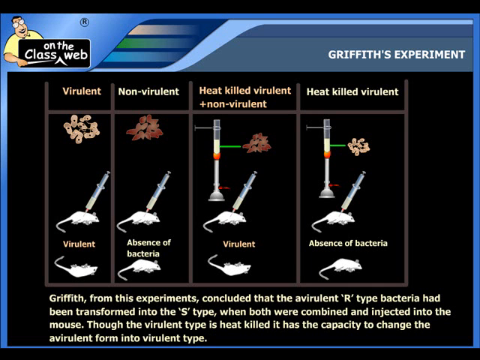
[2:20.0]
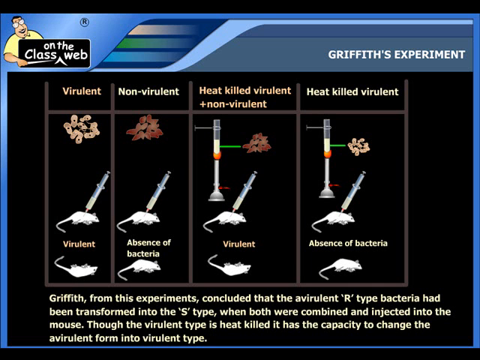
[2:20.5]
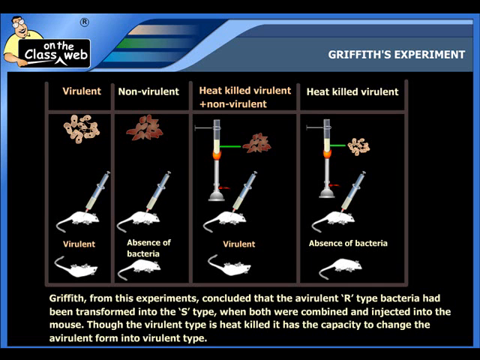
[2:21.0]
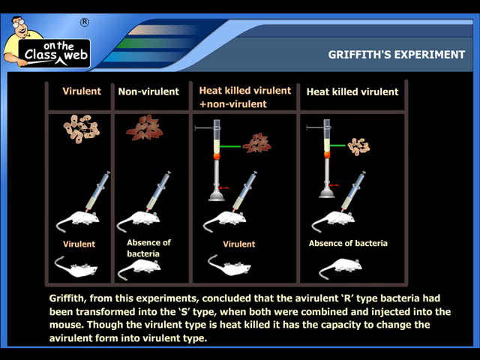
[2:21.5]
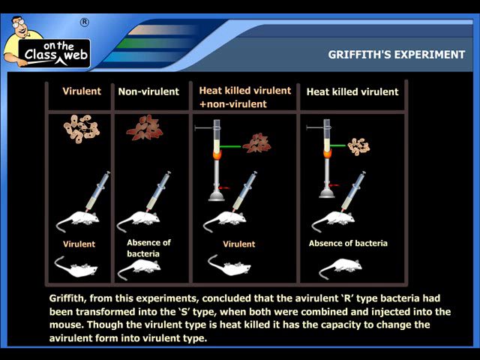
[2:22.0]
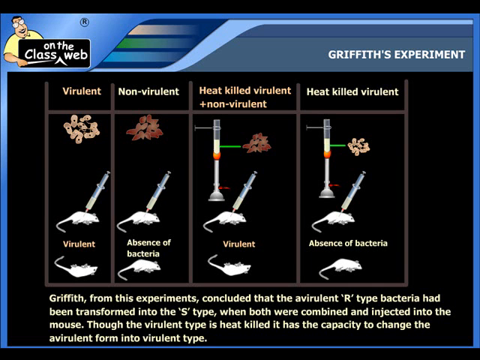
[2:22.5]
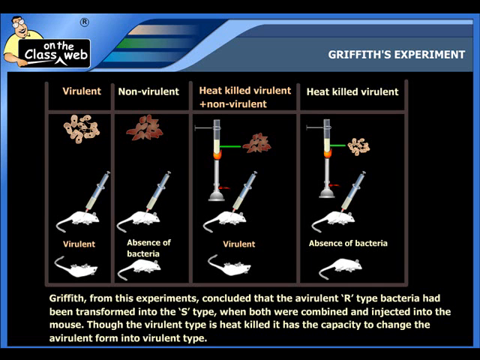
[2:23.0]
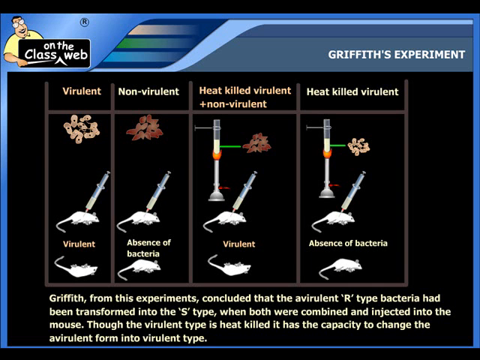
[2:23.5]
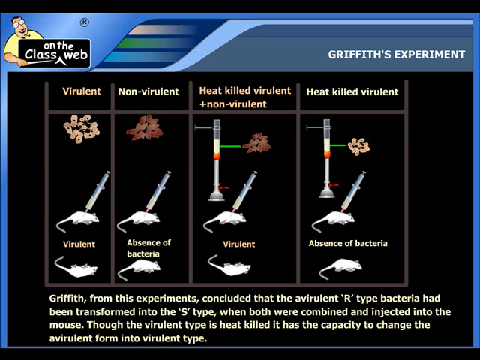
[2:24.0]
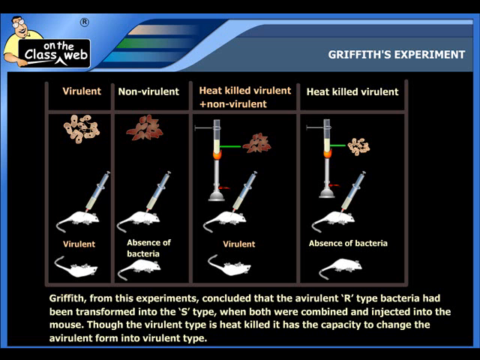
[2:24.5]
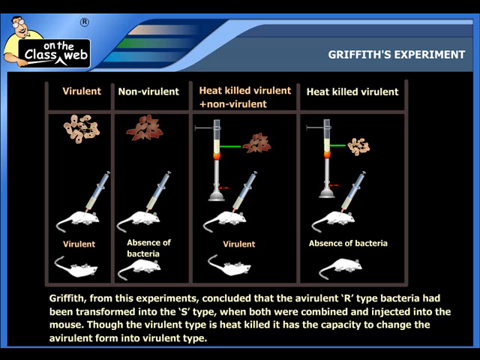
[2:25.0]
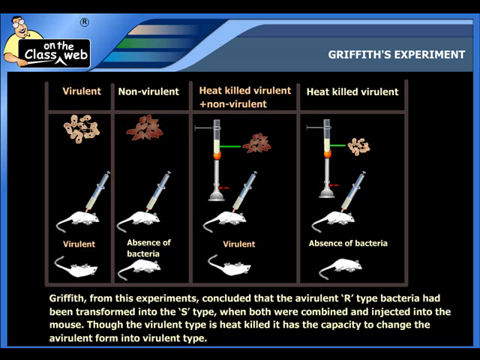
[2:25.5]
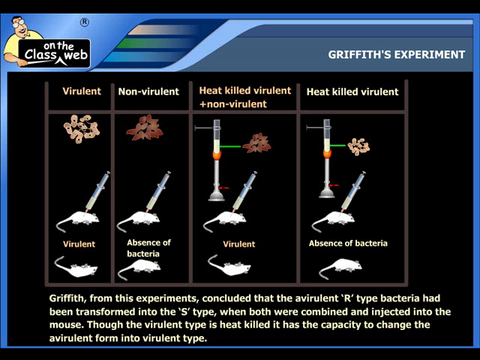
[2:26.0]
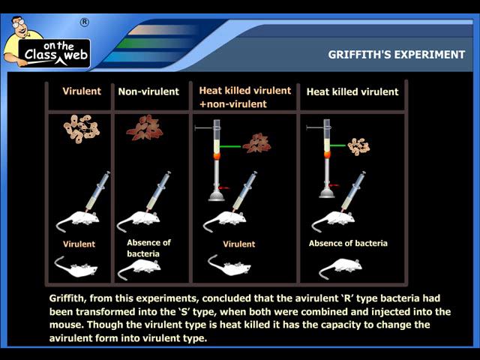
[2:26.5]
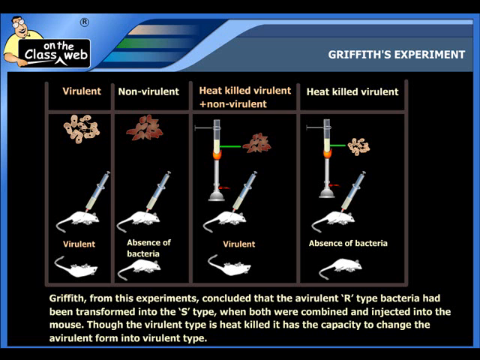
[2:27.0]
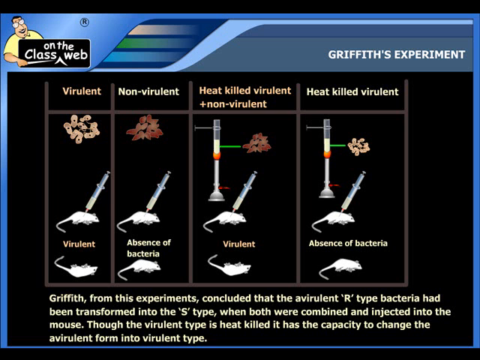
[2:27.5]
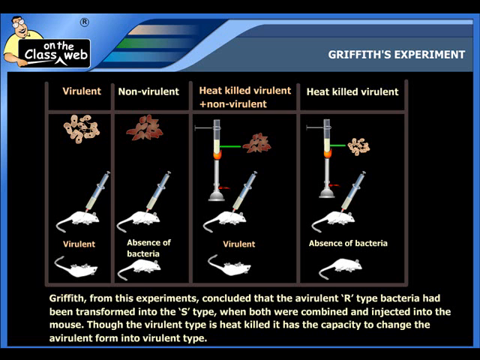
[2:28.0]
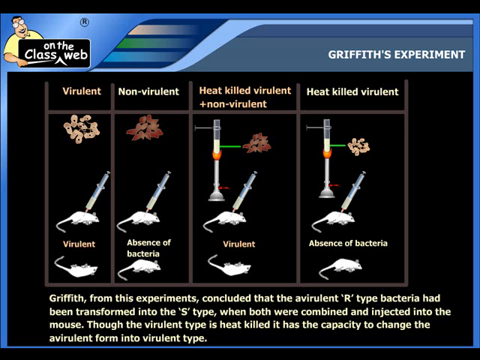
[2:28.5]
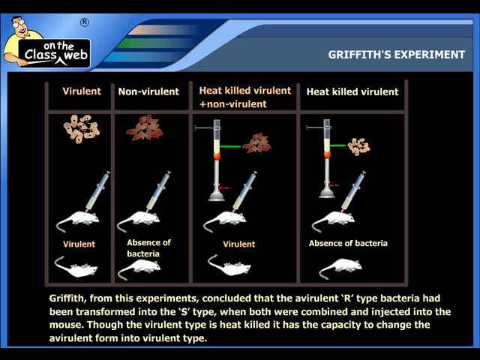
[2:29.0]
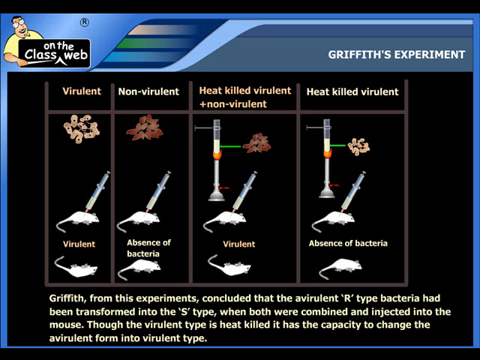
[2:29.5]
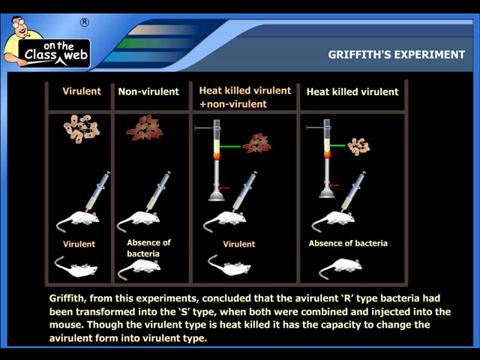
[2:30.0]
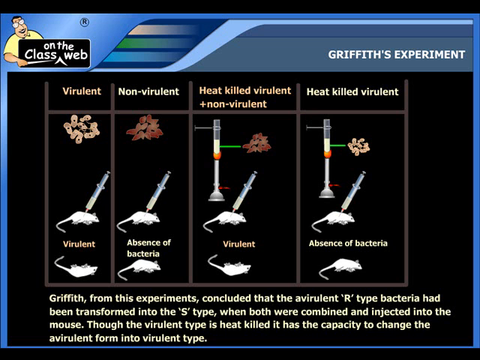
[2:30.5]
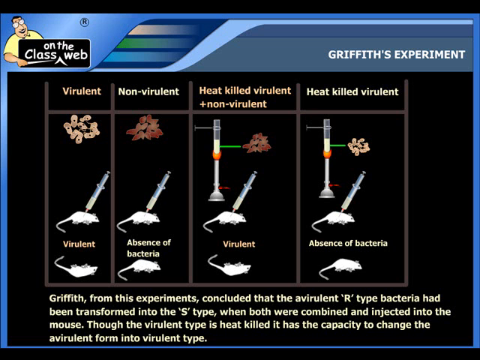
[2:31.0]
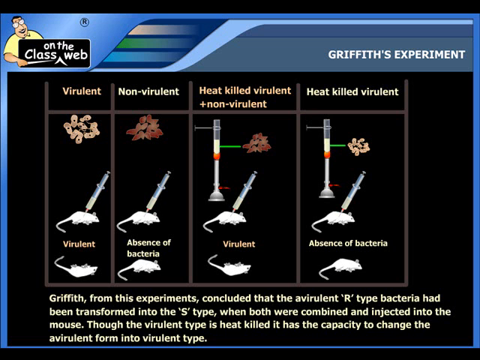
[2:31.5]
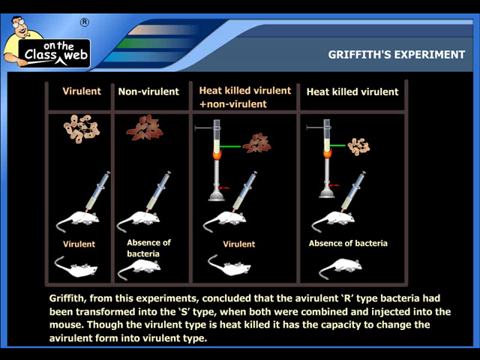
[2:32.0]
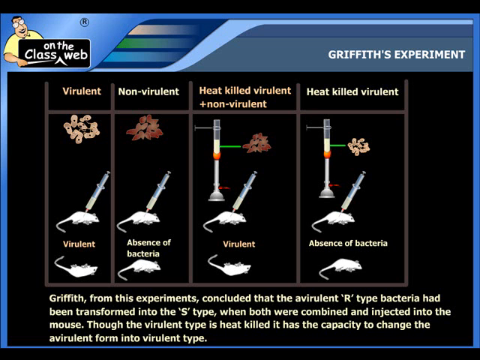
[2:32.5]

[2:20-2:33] The screen shows "on the class web" and "Griffith's Experiment." On the black screen are columns, from left to right: "virulent," "non-virulent," "heat-killed virulent + non-virulent," and "heat-killed virulent." In each column, from top to bottom, are the different bacteria and a white lab mouse with a syringe in its back. At the bottom of each column the mouse is either upside down, representing that it died, or right side up, representing that it lived.